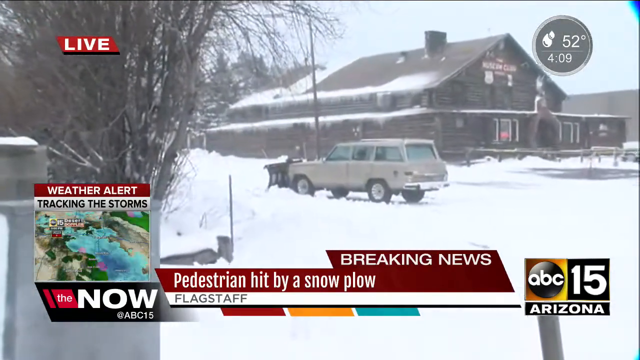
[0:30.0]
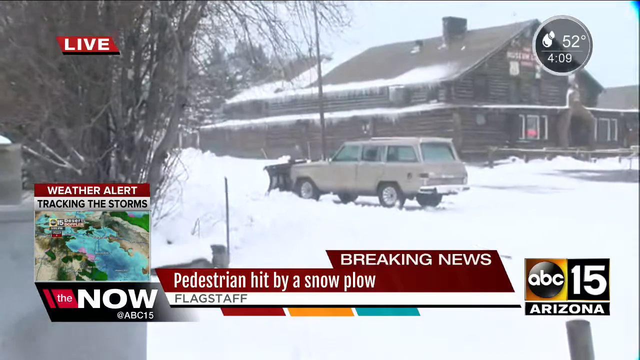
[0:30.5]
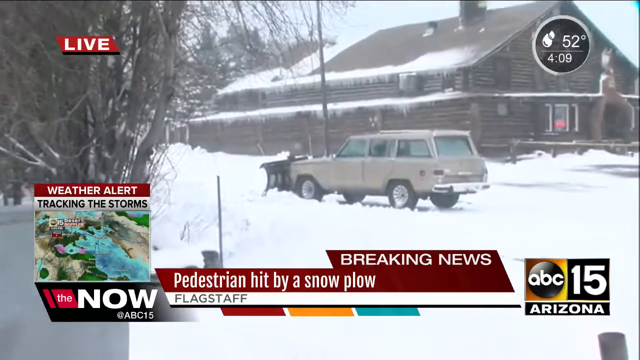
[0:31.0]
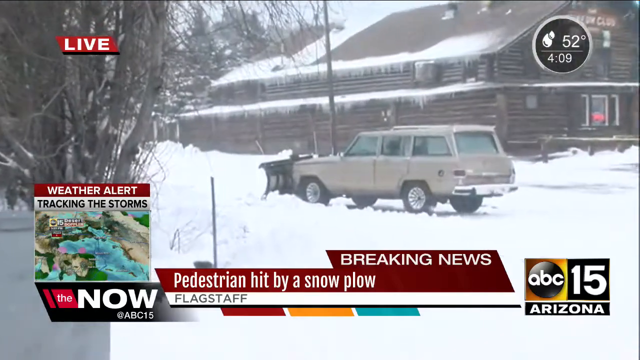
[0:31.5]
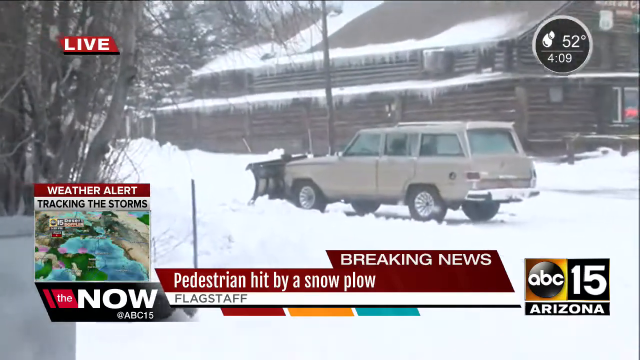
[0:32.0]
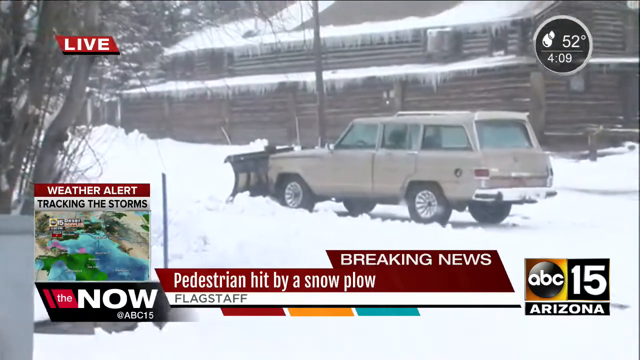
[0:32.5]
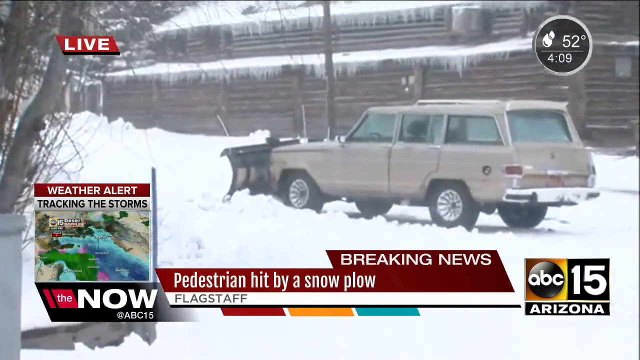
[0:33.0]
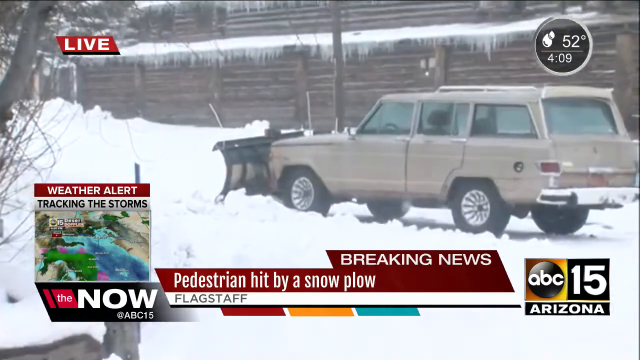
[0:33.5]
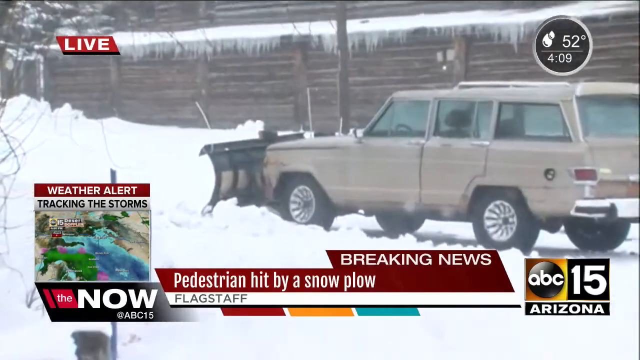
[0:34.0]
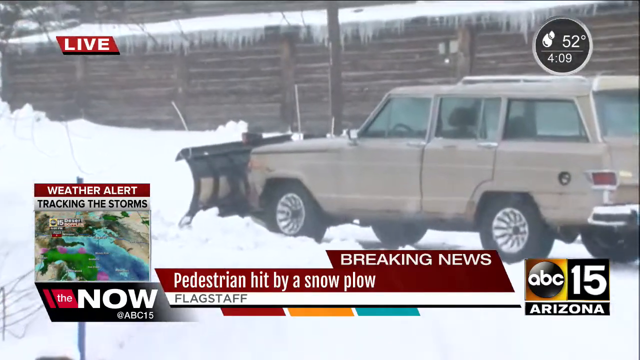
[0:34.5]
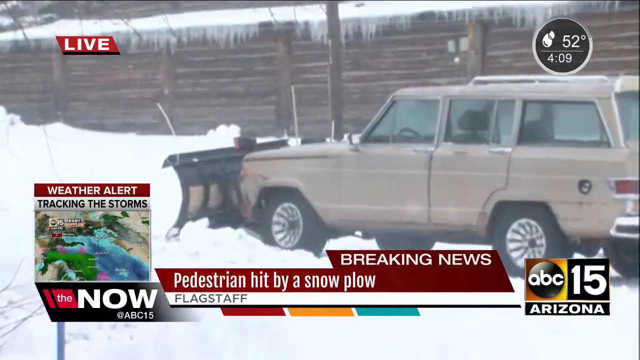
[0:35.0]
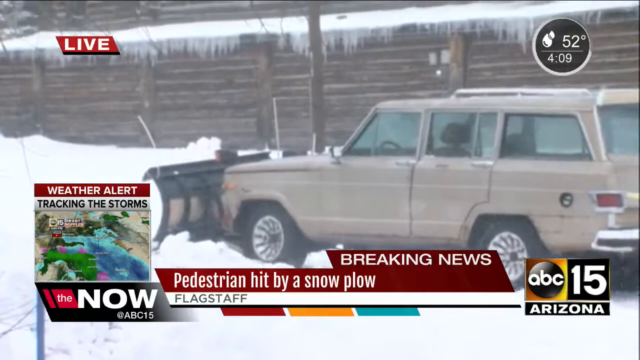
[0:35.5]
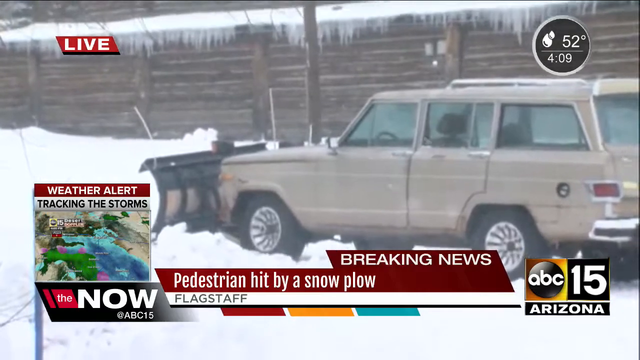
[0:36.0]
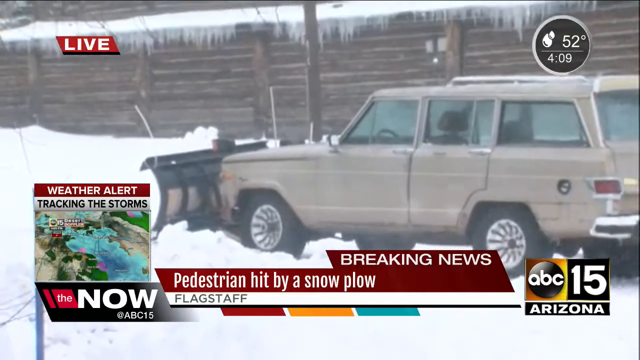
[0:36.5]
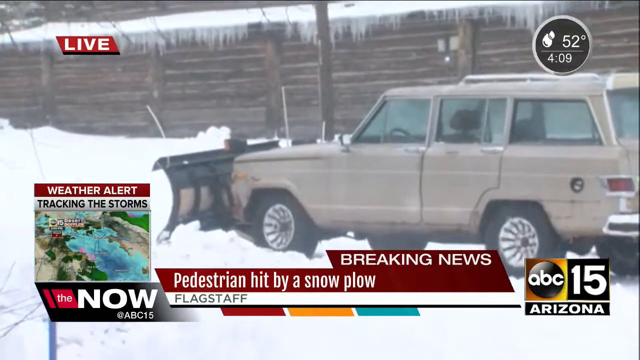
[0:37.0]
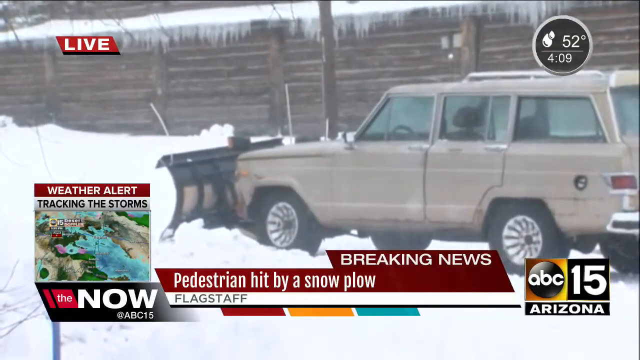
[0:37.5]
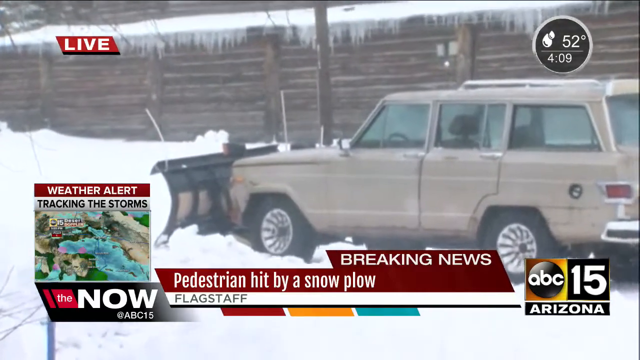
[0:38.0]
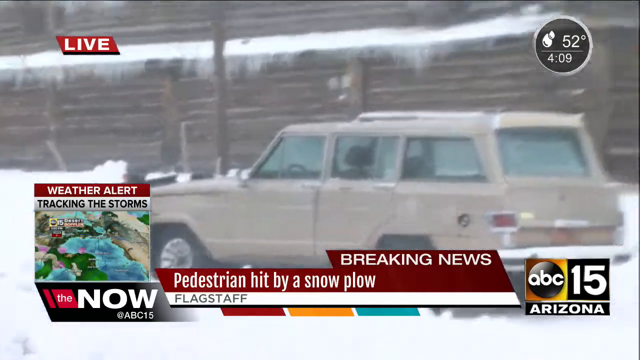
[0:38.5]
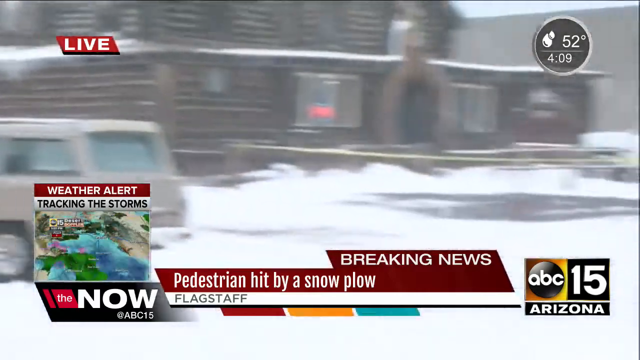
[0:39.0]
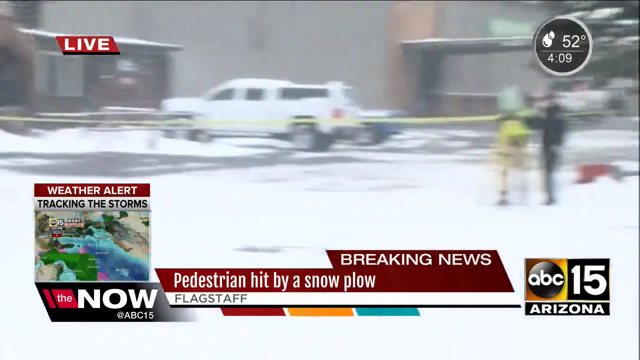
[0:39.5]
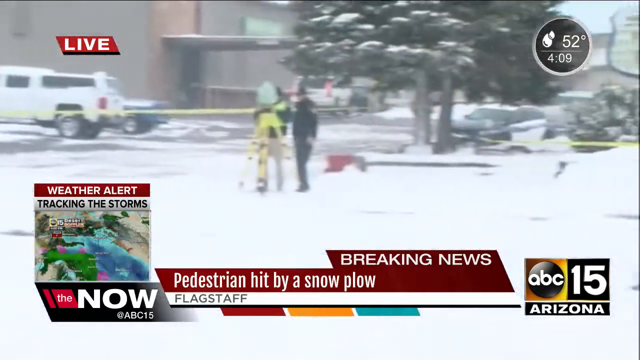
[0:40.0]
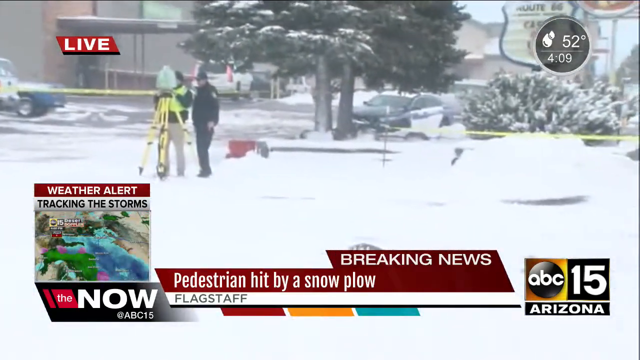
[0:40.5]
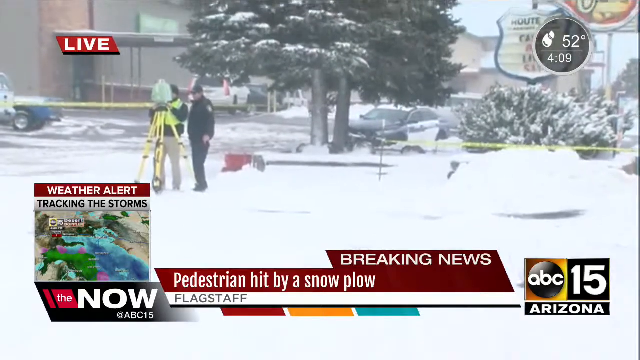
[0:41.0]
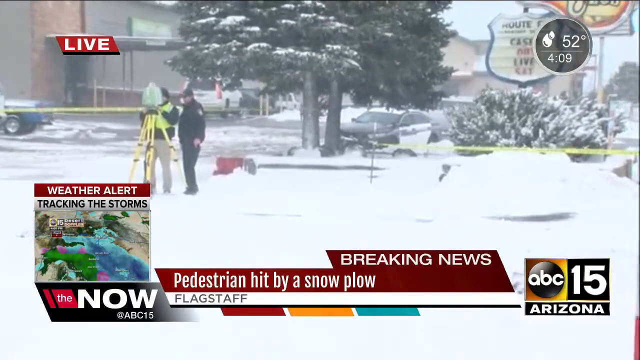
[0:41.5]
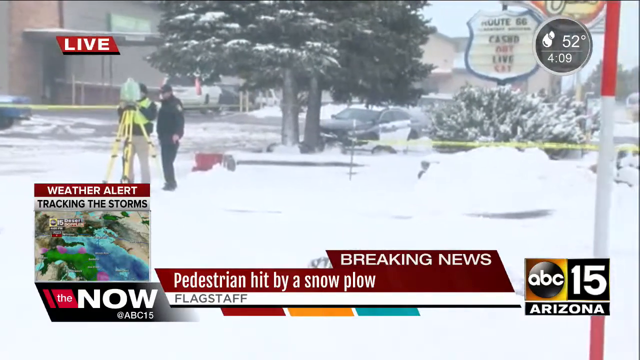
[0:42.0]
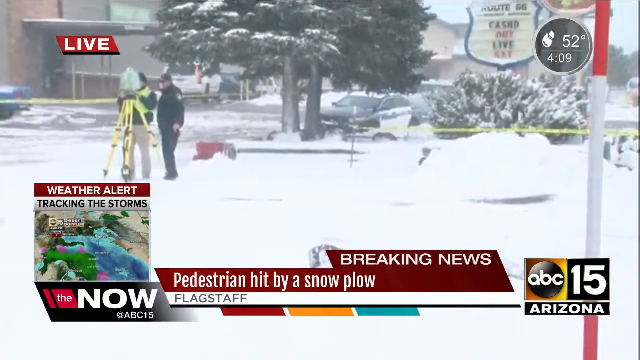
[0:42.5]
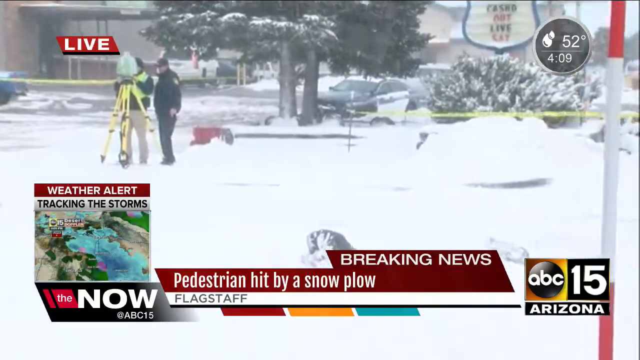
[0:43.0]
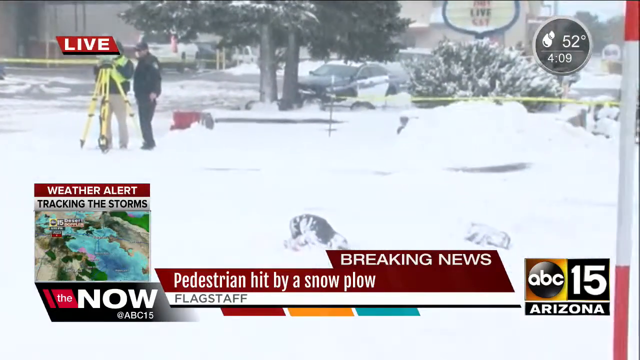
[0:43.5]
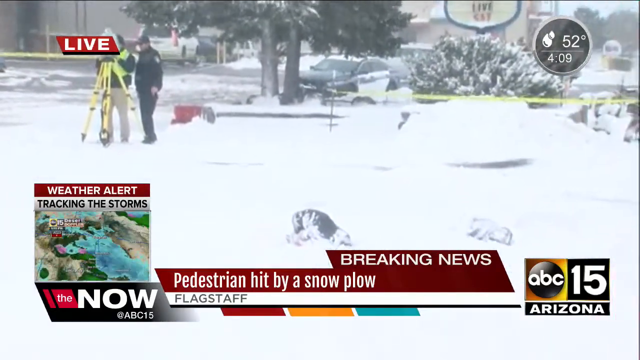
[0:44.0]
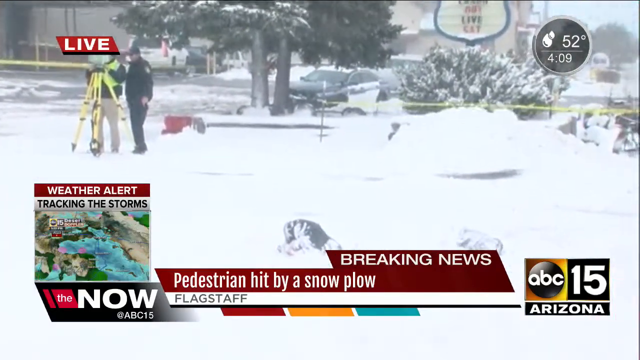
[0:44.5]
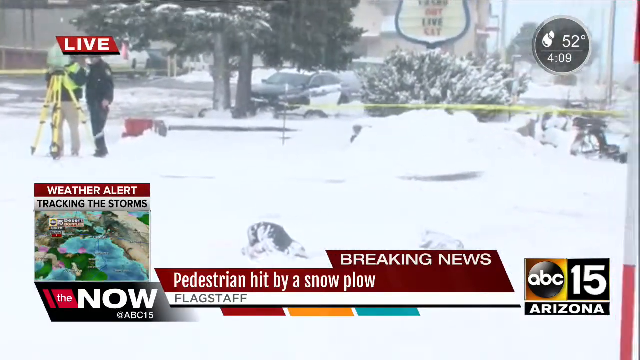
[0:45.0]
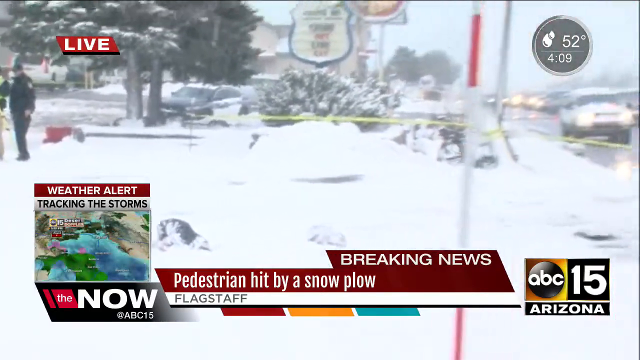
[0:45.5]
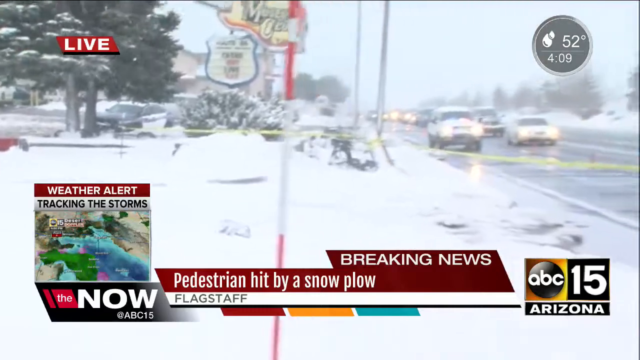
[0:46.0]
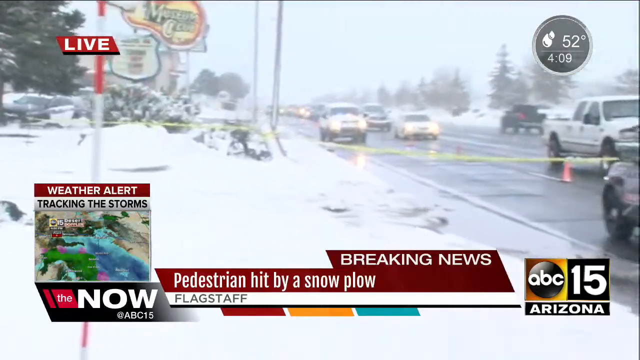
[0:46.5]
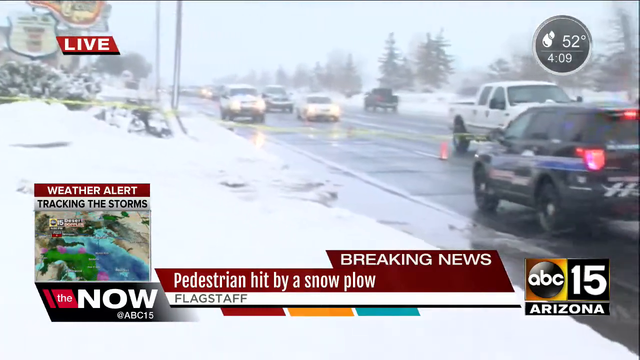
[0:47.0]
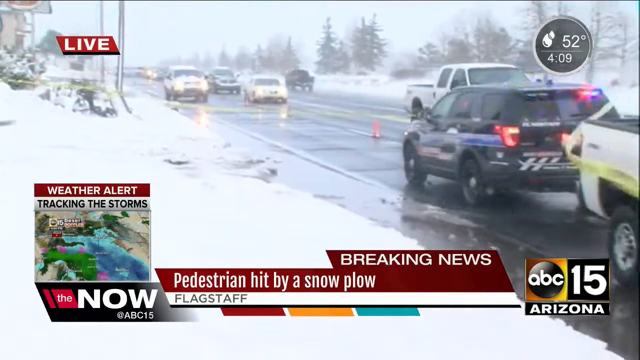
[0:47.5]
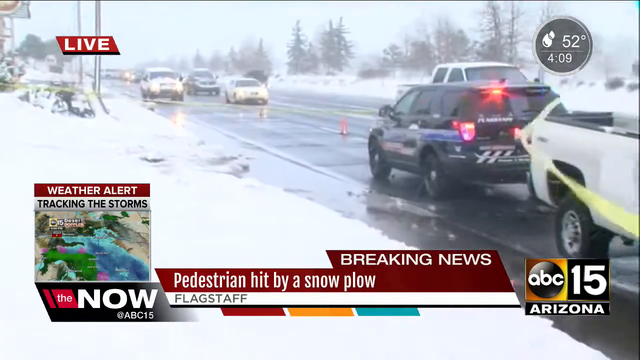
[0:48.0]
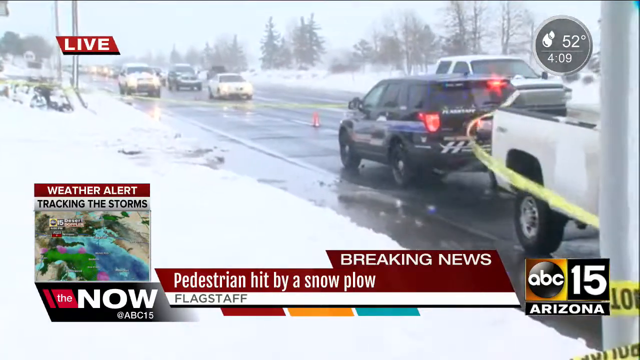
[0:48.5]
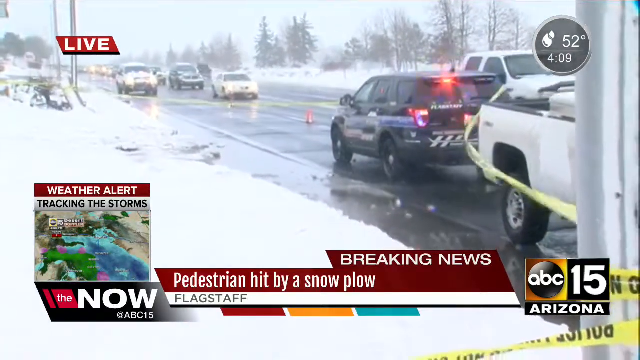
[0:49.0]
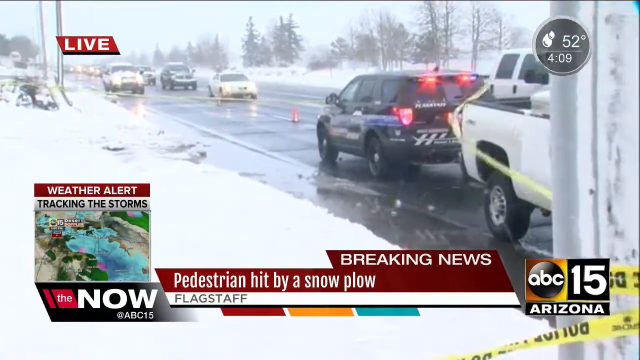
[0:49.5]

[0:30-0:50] An older model SUV sedan, beige in color, is behind the caution tape. It is very snowy, with a lot of snow on the ground, and the camera zooms in. The SUV may have a plow on the front; there is a black oval thing on it, and it looks like it may have been in the process of pushing snow. The screen indicates the story is live, and still says "breaking news pedestrian hit by a snow plow", with the small storm map still up tracking a storm. A police officer stands next to what looks to be a surveyor, who is looking through a pole. The caution tape kind of moves around in the wind, and some orange cones are set up by the police car.